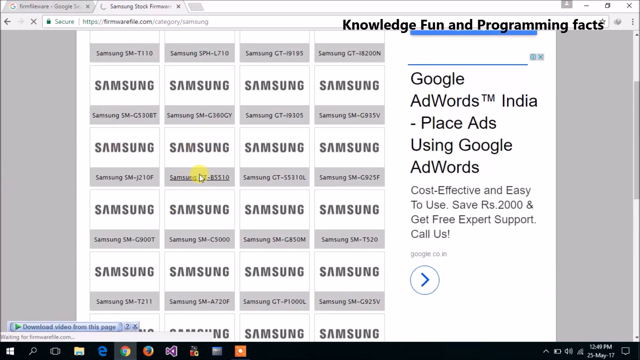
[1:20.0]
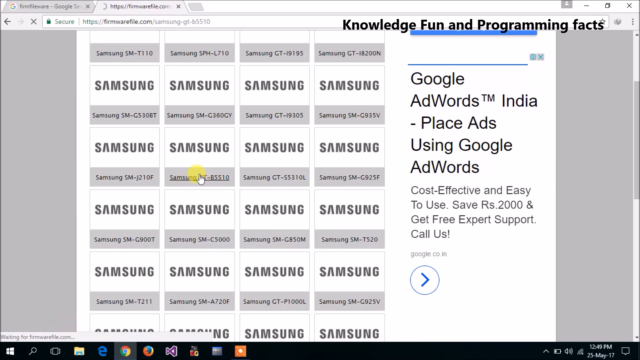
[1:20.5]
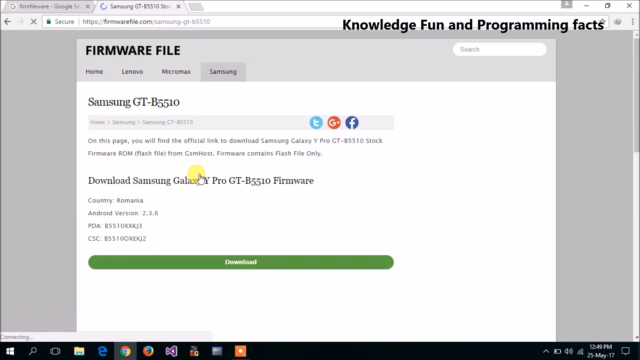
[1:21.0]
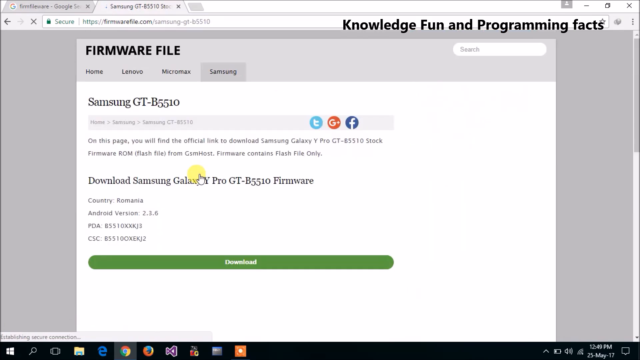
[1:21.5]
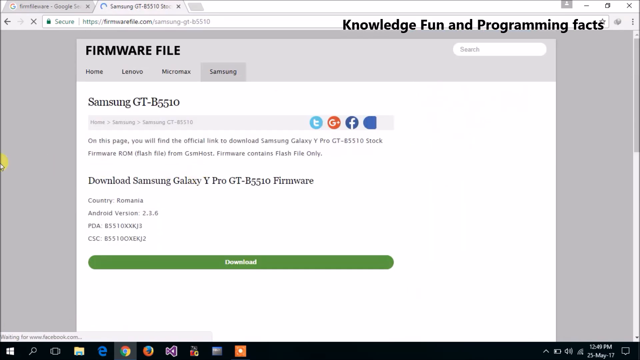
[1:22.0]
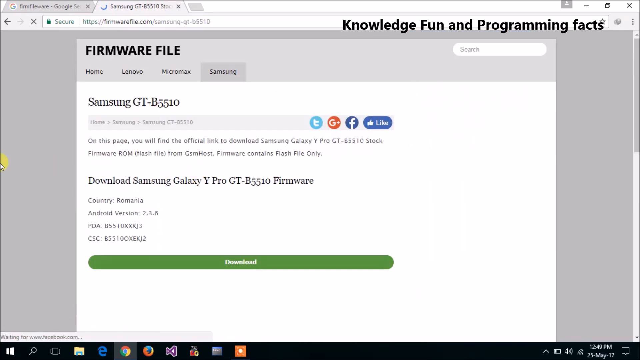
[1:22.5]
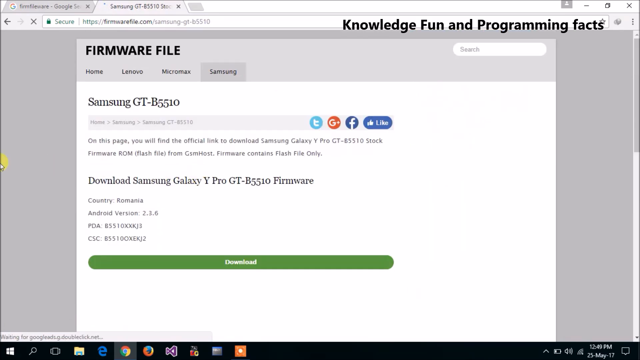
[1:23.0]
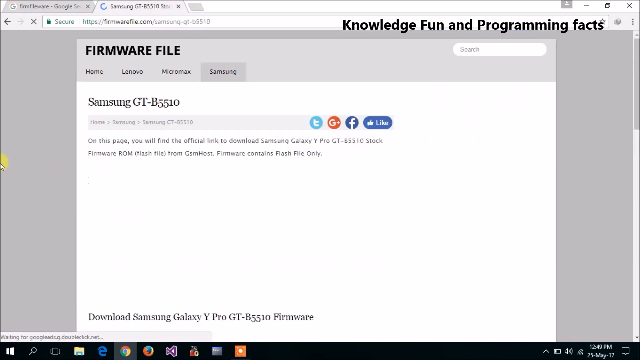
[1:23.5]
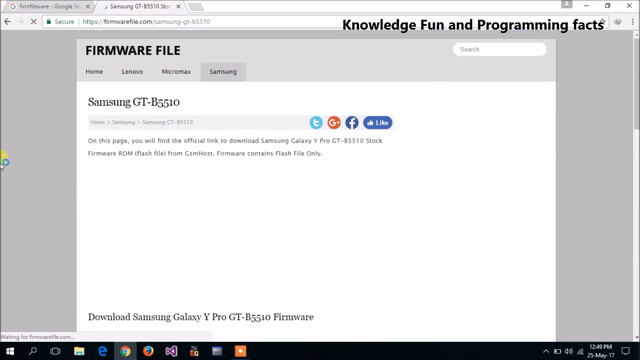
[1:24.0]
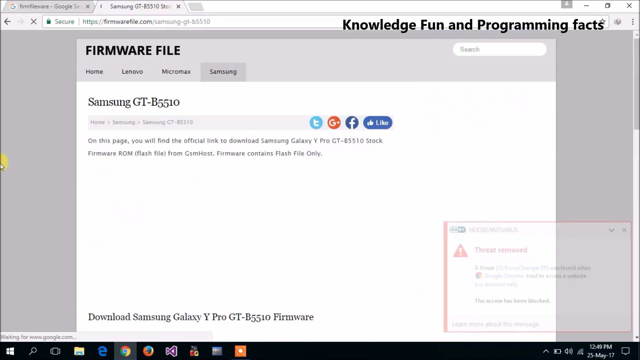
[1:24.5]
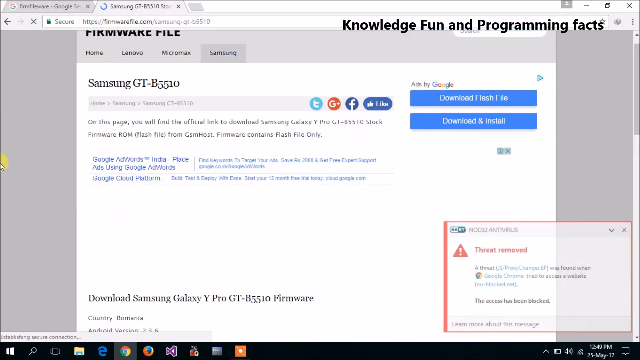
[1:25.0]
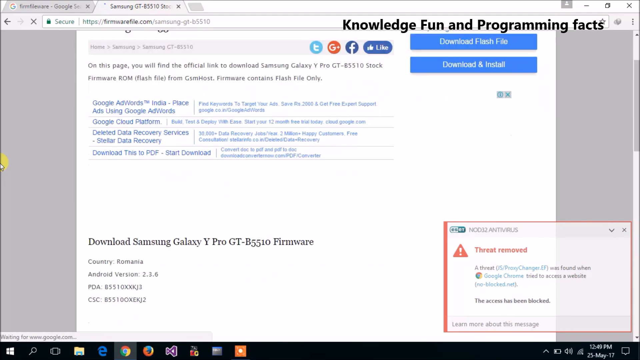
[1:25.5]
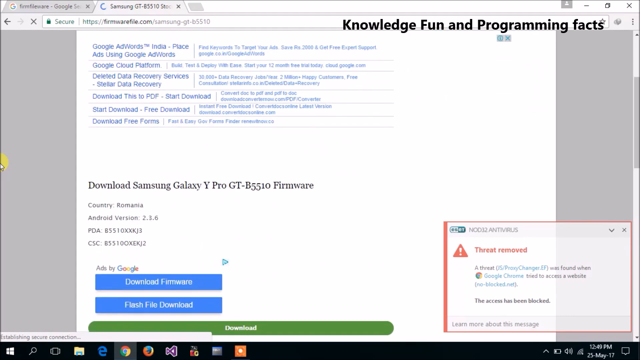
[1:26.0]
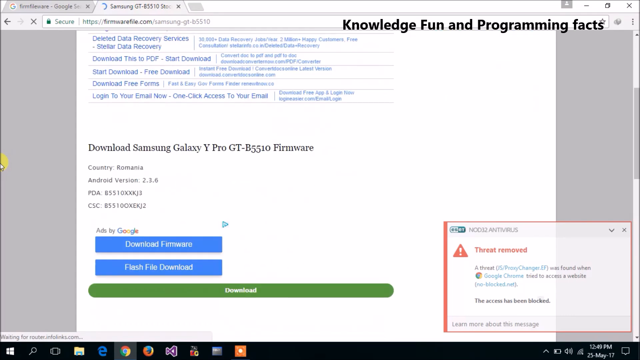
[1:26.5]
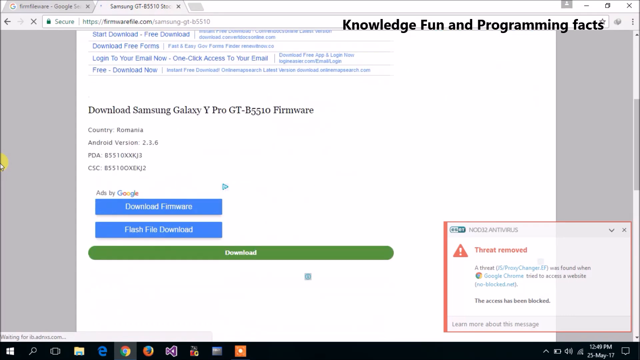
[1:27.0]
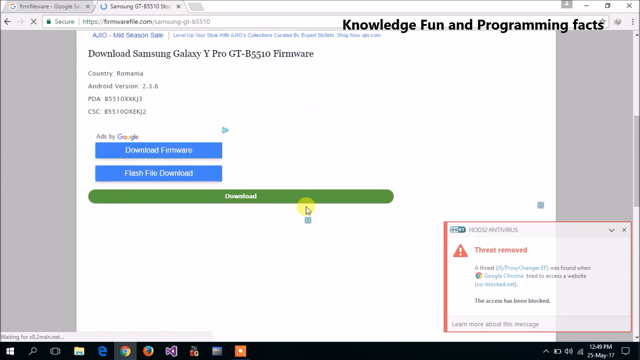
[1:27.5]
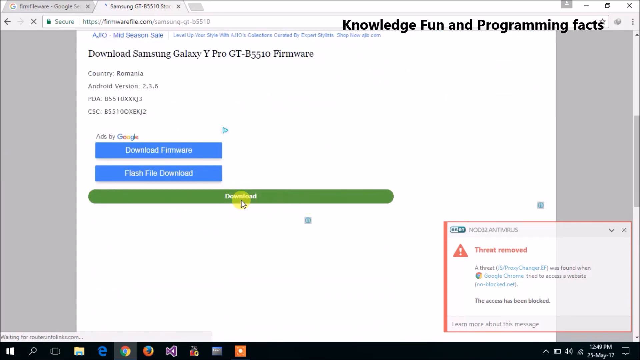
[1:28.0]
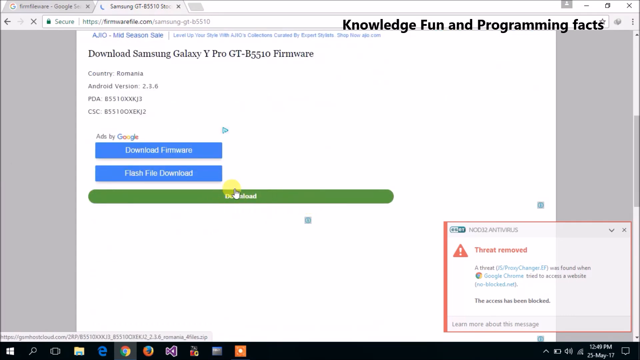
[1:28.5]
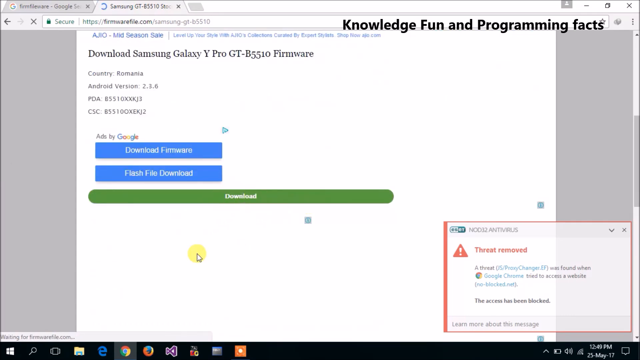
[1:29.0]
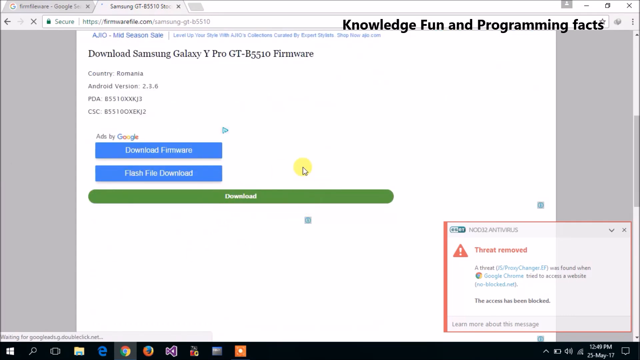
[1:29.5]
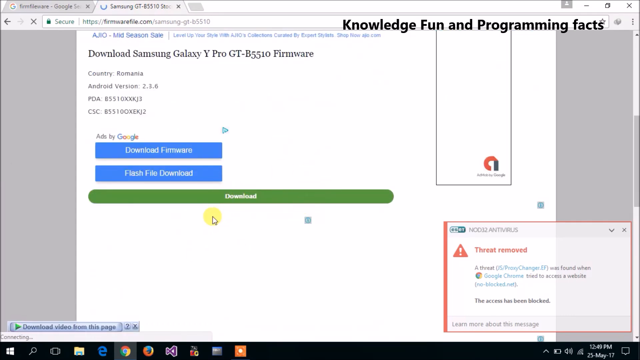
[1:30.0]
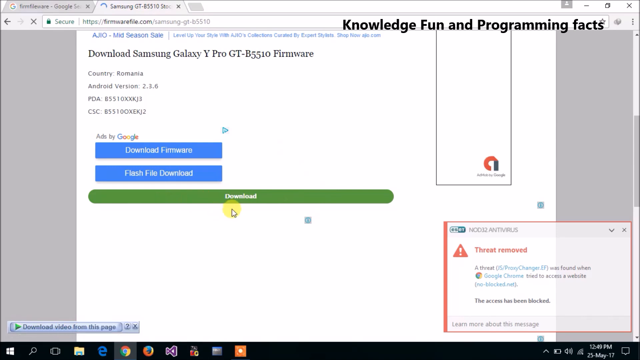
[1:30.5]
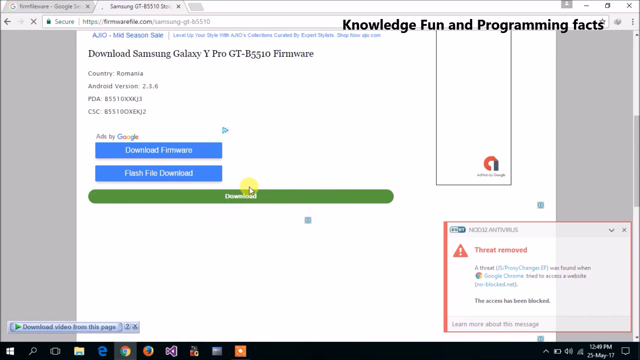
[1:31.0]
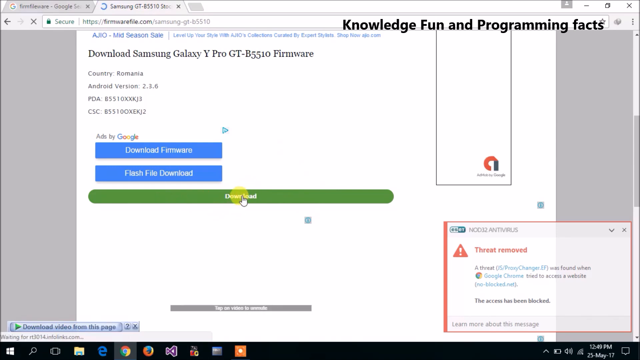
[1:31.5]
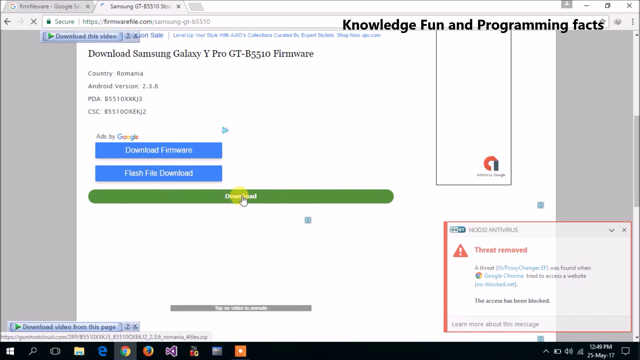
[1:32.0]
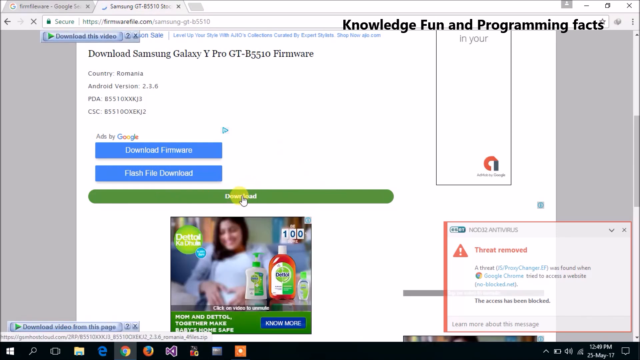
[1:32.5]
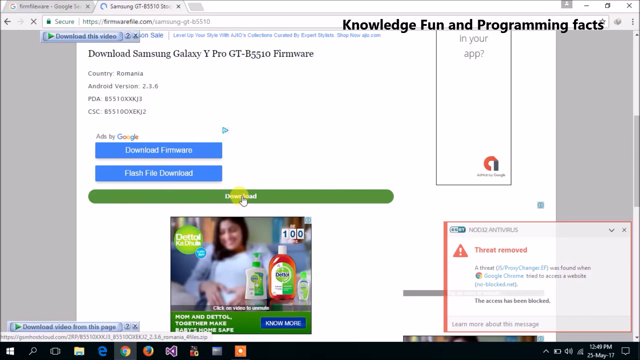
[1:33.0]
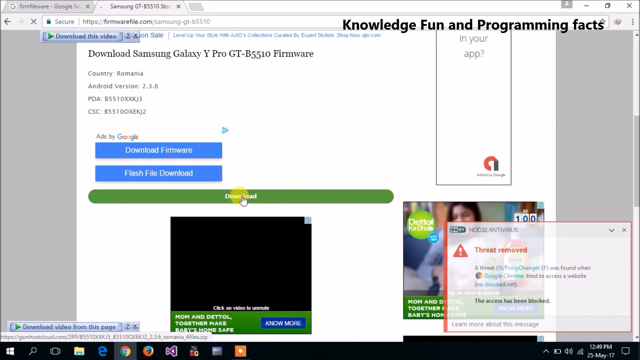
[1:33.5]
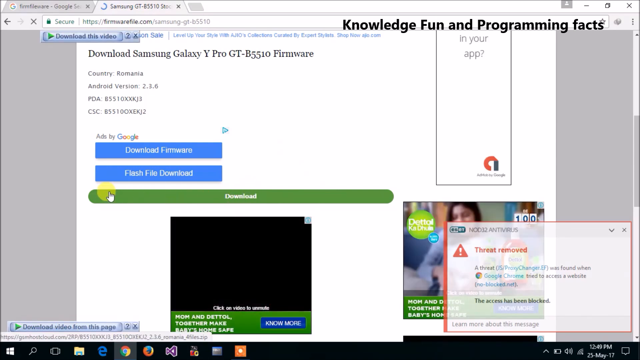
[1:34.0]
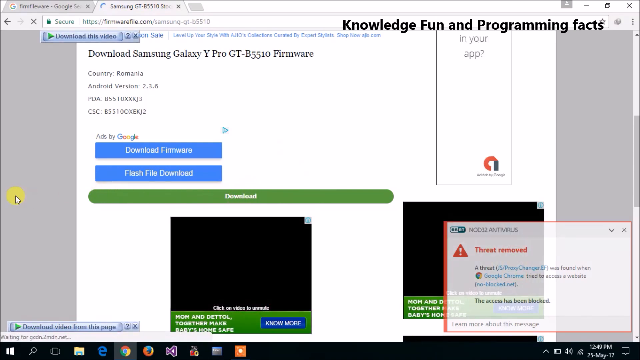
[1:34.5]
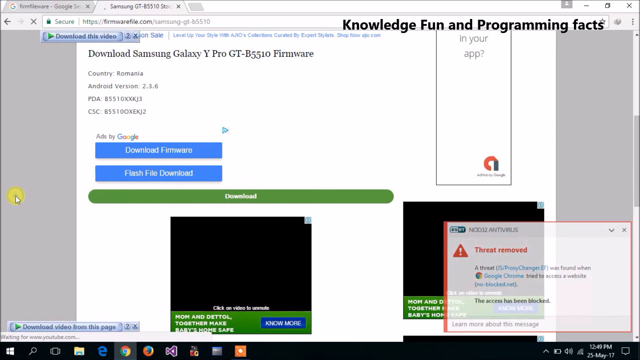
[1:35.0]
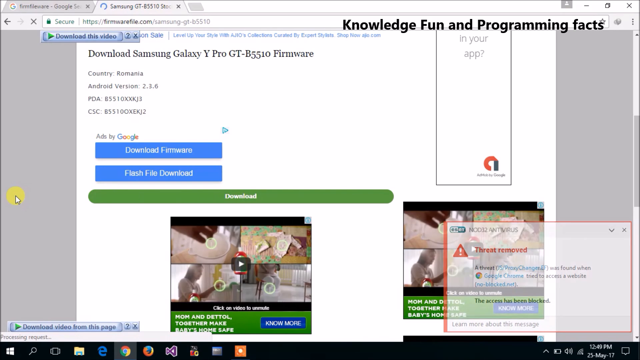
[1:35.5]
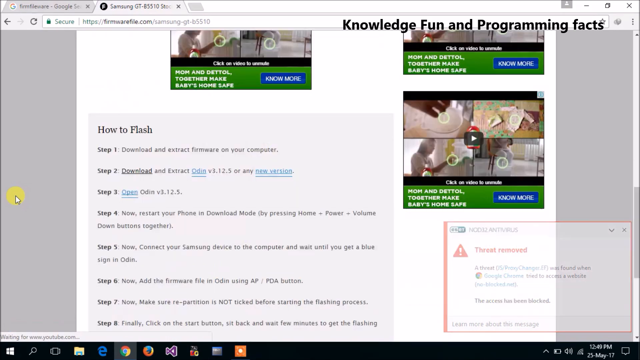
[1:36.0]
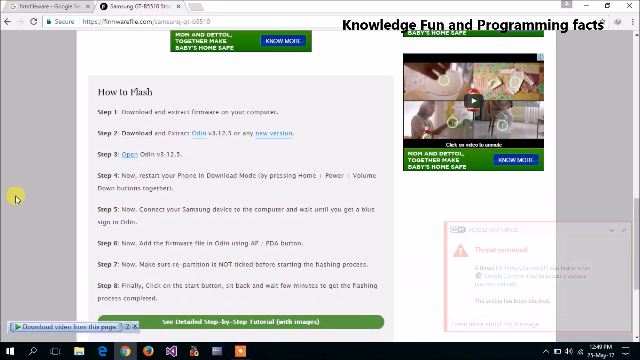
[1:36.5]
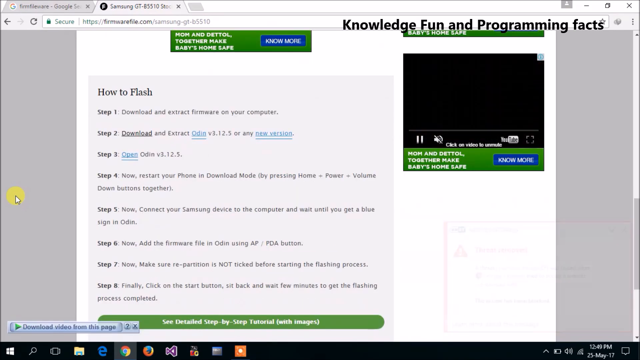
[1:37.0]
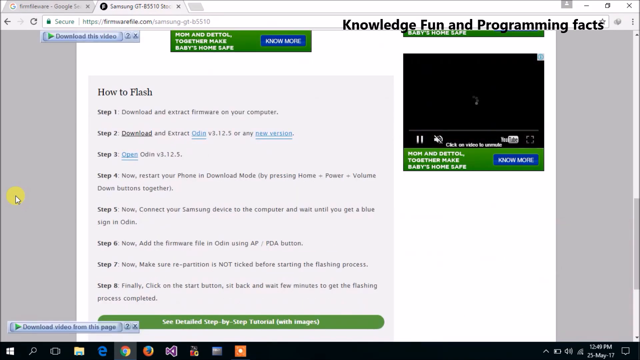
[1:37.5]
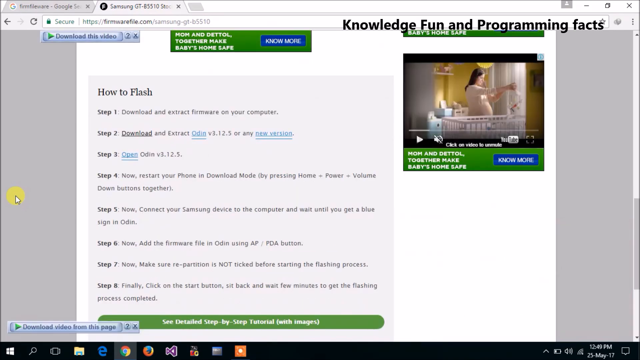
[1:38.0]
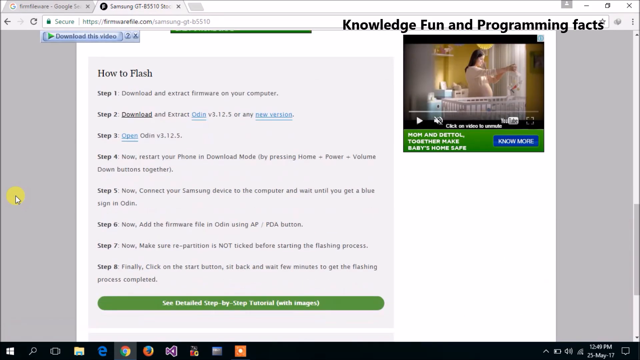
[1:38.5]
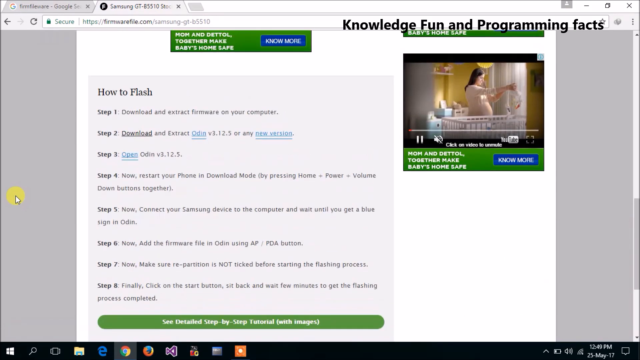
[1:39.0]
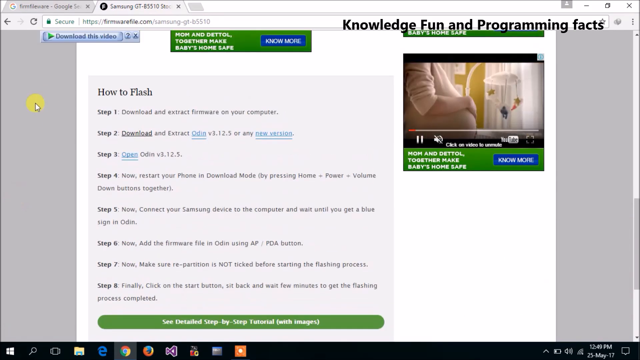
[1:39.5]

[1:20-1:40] The video goes from the rows of logos to a page with the heading Firmware File. Below it are sections of the page including Home, Lenovo, Micromax and Samsung, and underneath these is the text "Samsung GT-B5510." There is also a button to download the software at the bottom of the page. The video then cuts to a page with a lot of text written in blue. The user scrolls down and moves the cursor close to the download button, which is white text on a wide, narrow, green background. As the cursor hovers on it, the image of a smiling black-haired woman against a blurry background appears, with 100 in the top right corner and Dettol in the top left corner of the image and bottles of Dettol in front of the woman. The image then moves to the right, and the video cuts to a page with some embedded videos. Underneath one of the videos is the text "How to Flash," with different steps for how to do this.